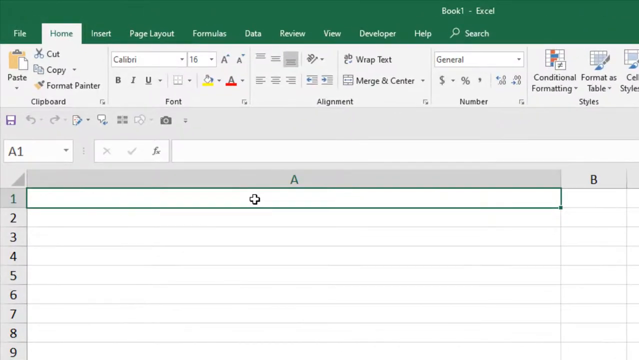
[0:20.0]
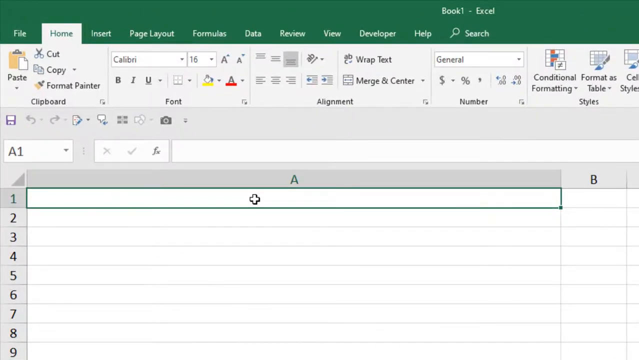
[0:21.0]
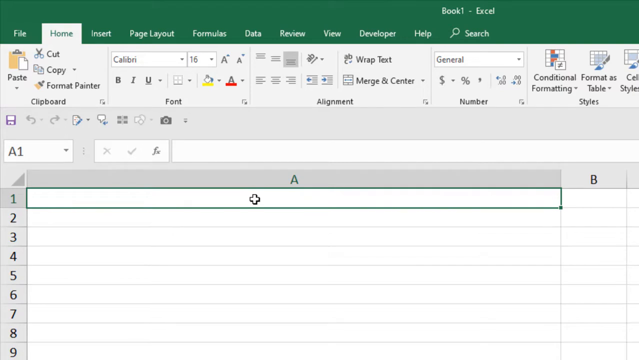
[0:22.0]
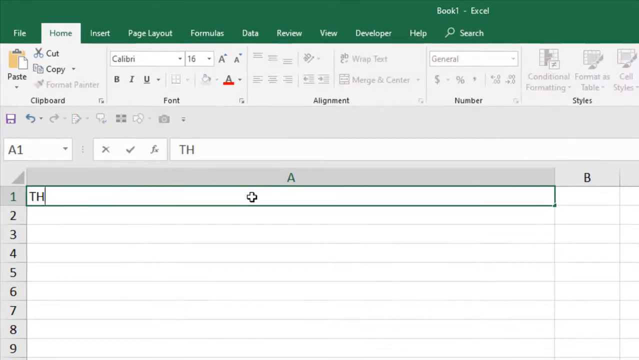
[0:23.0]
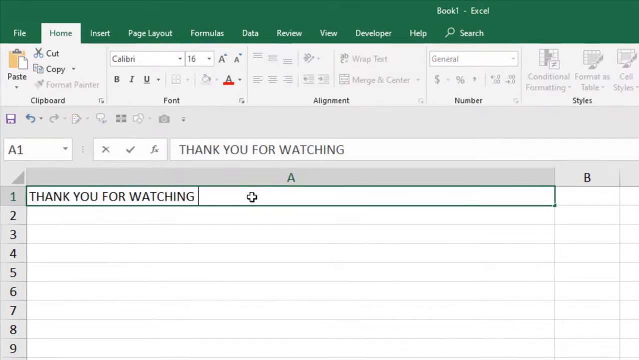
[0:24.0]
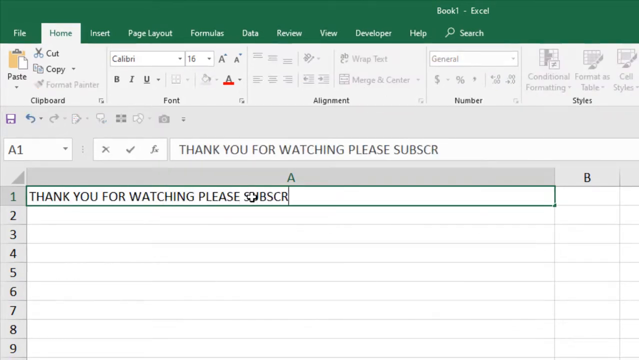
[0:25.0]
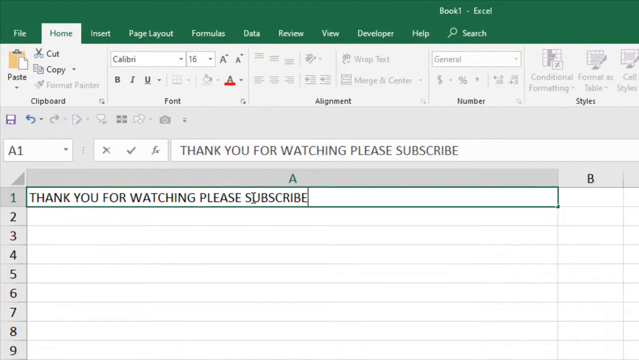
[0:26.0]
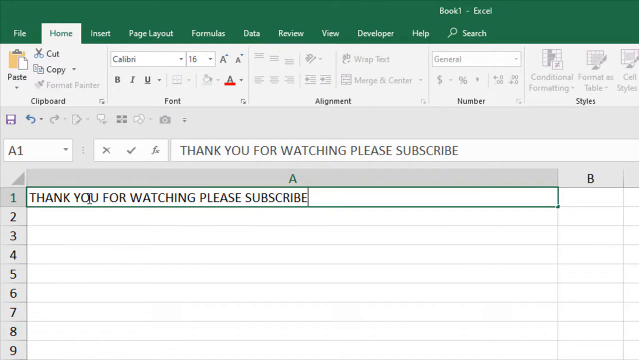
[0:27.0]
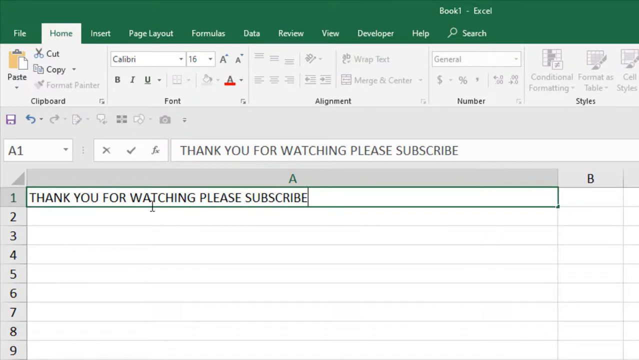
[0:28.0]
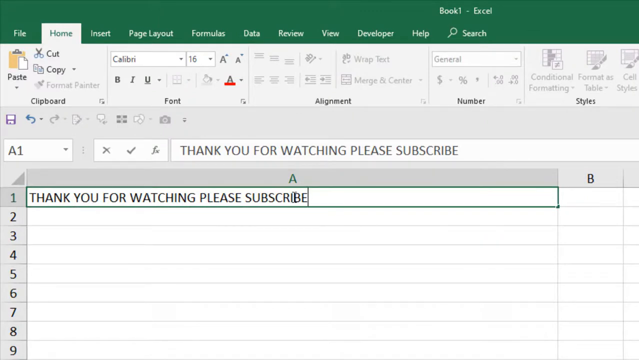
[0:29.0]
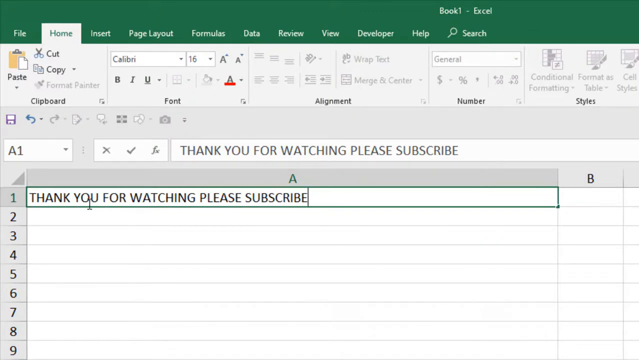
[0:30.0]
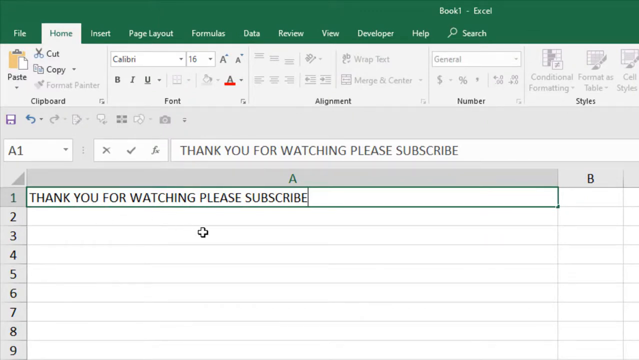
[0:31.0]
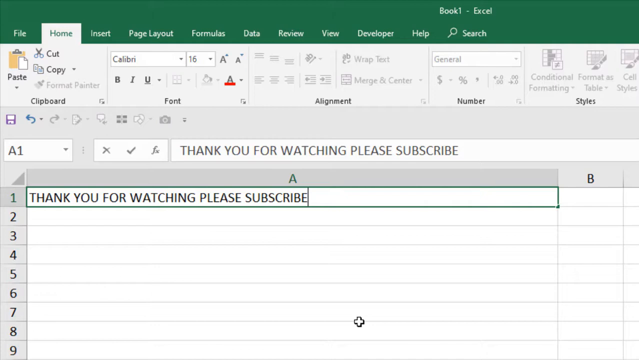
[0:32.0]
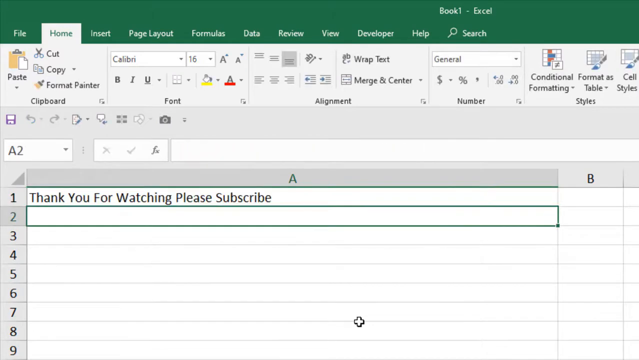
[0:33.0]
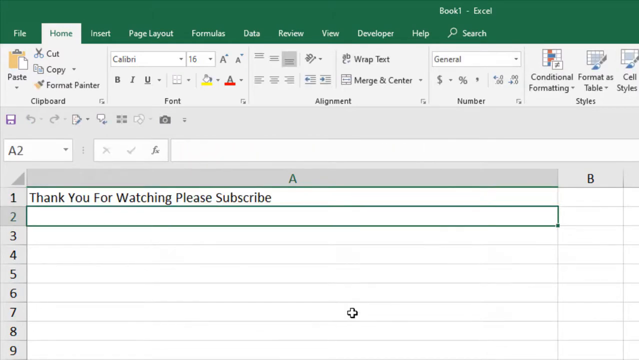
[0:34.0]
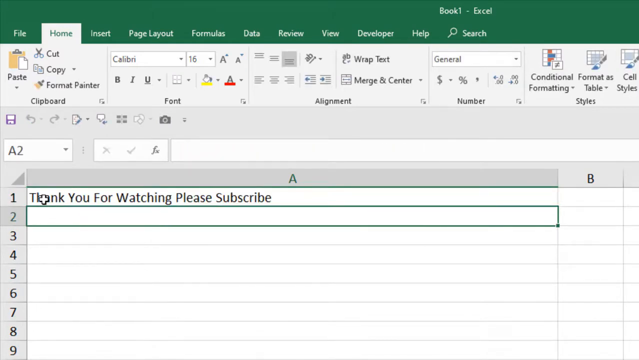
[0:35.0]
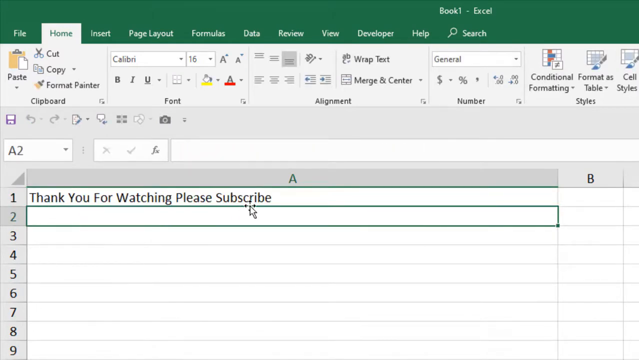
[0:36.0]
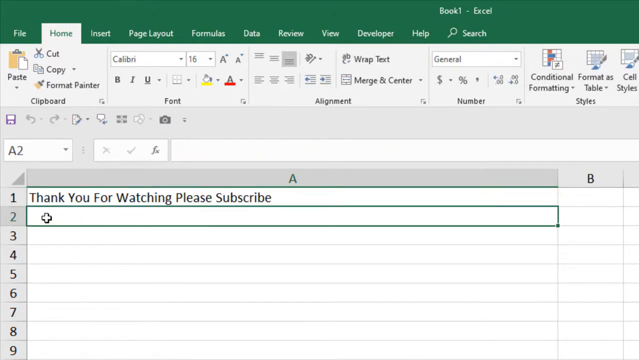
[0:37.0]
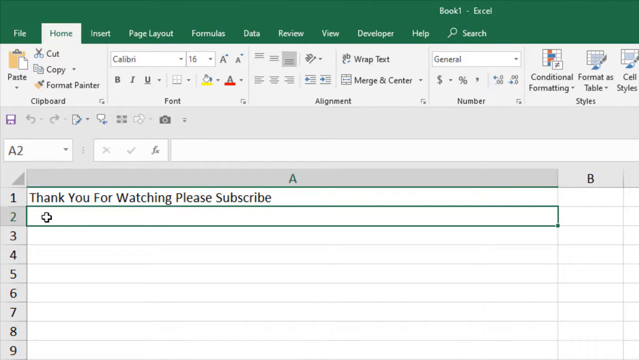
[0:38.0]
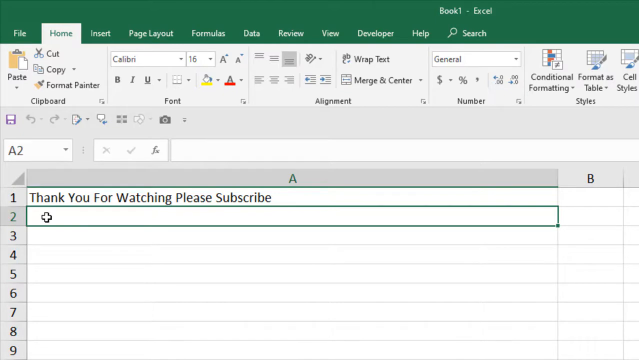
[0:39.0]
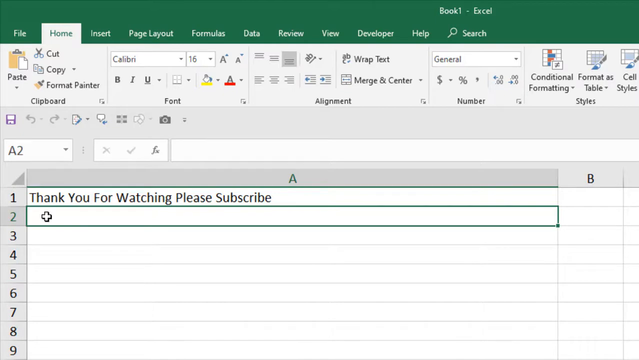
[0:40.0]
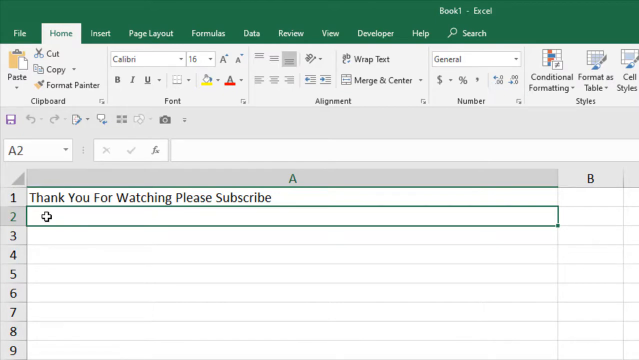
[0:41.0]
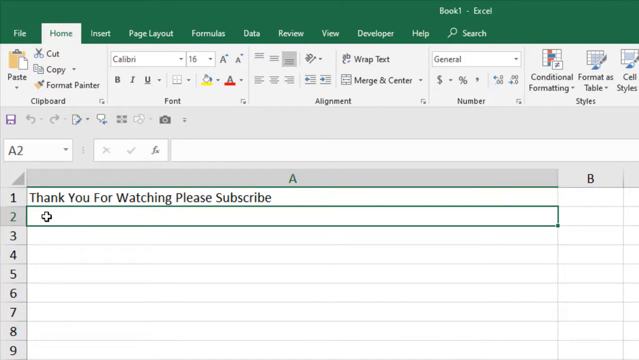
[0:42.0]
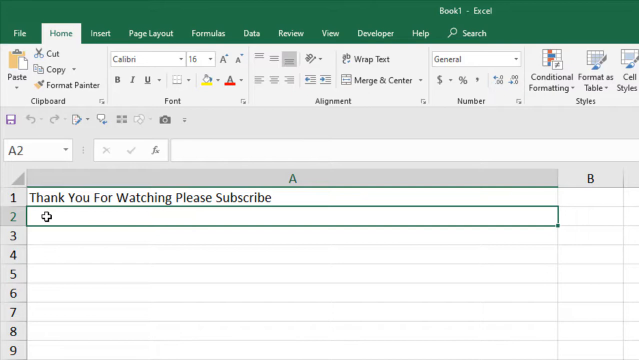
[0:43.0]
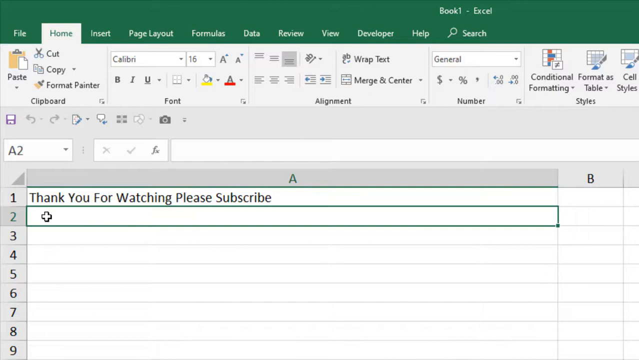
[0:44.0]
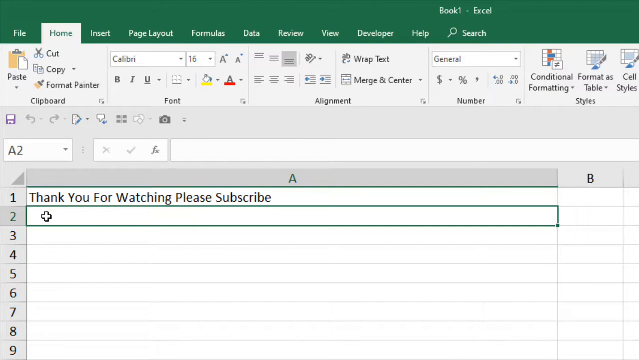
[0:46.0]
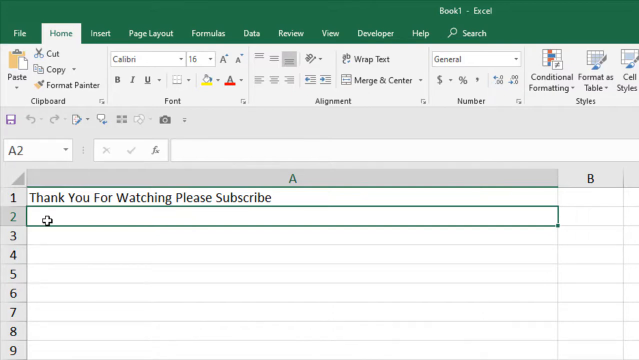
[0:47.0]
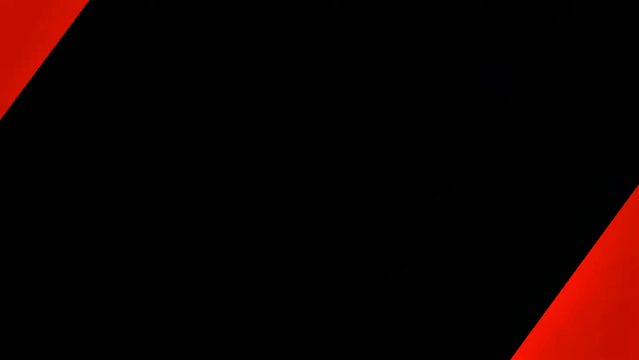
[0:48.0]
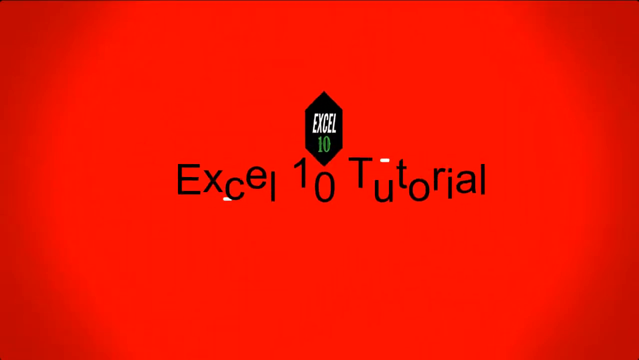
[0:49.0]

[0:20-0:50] The view is zoomed in. Above it is a drop-down, and there is a gray bar with a blue disc. There is a curved back button, a curved forward button, an icon like a magnifying glass over a piece of paper with a drop-down, a comment button and a camera. Below that is the cell box showing "A1" with a drop-down, and a formula area with an X, a check mark and an "fx" function button. Text is typed in all caps into cell A1, appearing quickly from left to right: "thank you for watching, please subscribe". The cursor is moved over each word from left to right, then blinks after the last word, "subscribe". The selection moves down to A2. A1 now has a border at the top and bottom but not on the right, while A2 has a border on all four sides, and the plus-sign cursor is near it. Numbers one through eight run down the far left. The spreadsheet then disappears and an animated red sheet appears with "Excel" in the middle in italic capitals. Beneath it is a six-sided shape with "10" written inside. Below that, outside the shape, "Excel 10 Tutorial" is written in big capitals.